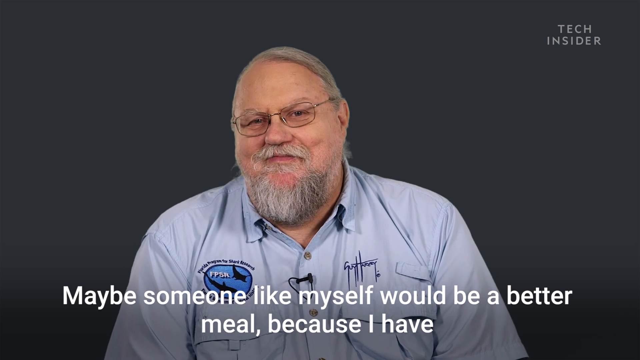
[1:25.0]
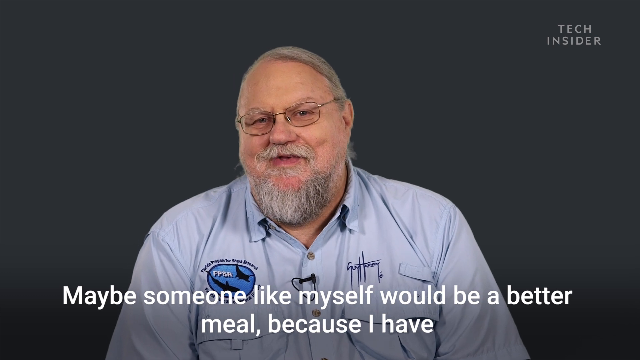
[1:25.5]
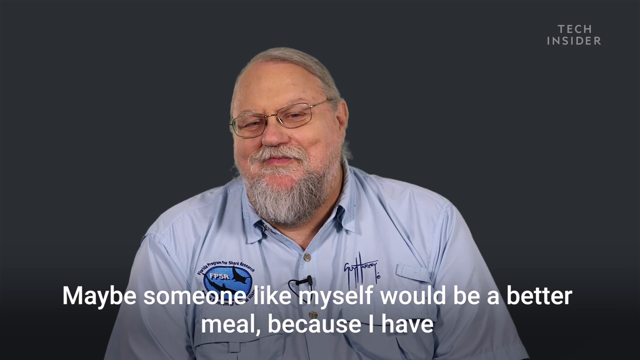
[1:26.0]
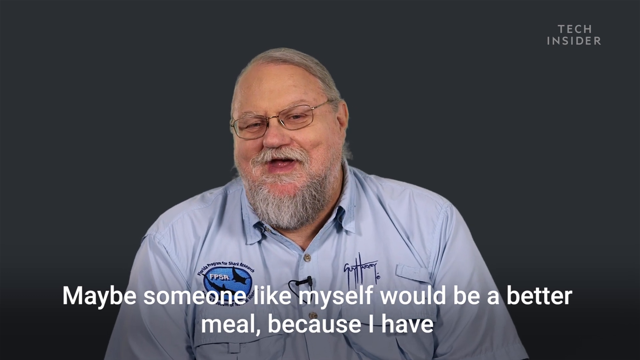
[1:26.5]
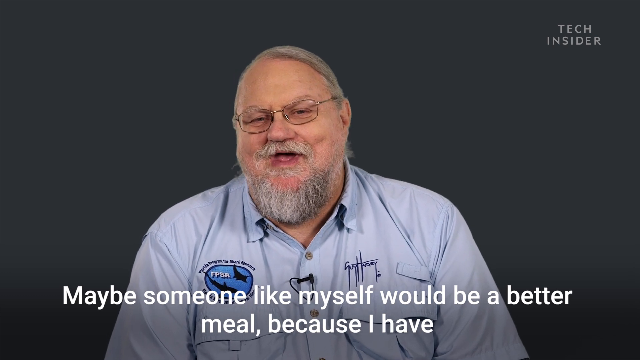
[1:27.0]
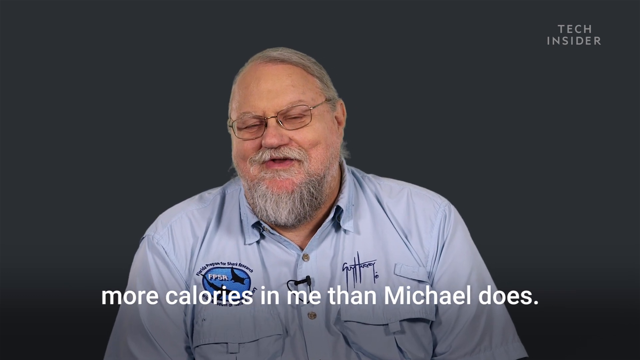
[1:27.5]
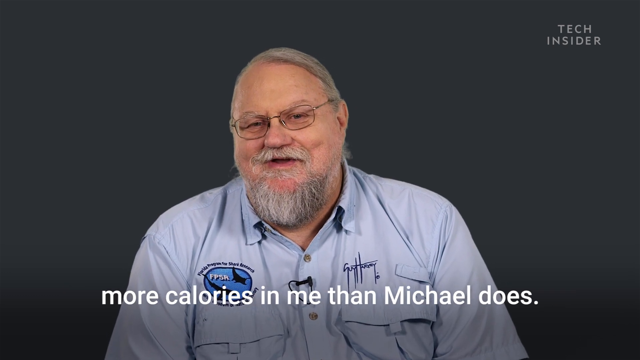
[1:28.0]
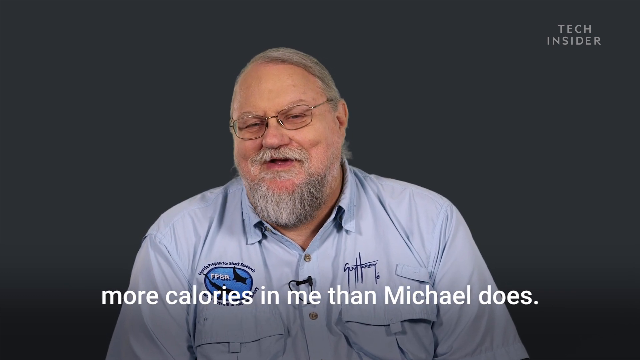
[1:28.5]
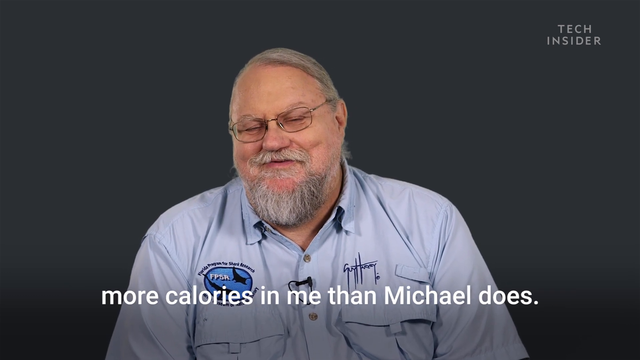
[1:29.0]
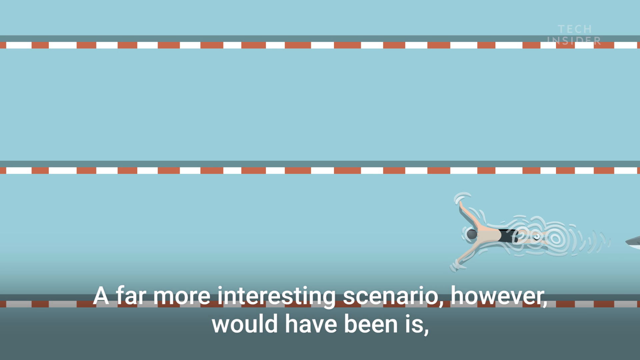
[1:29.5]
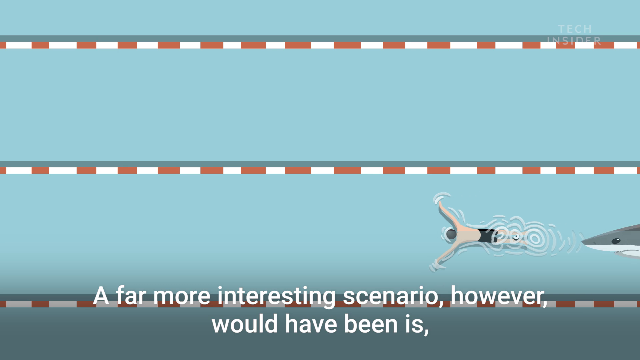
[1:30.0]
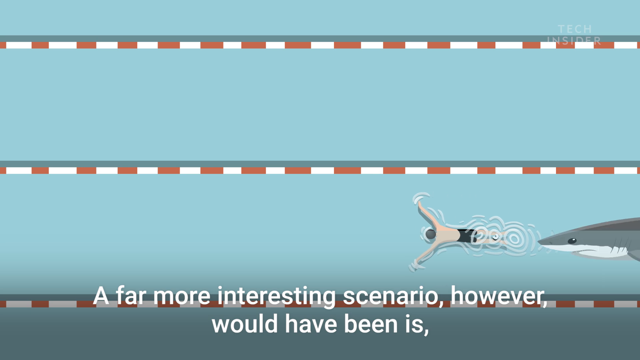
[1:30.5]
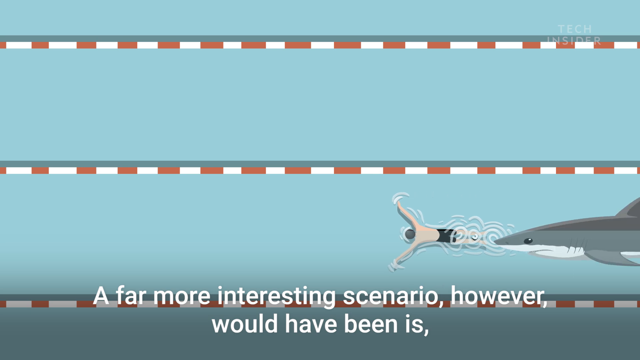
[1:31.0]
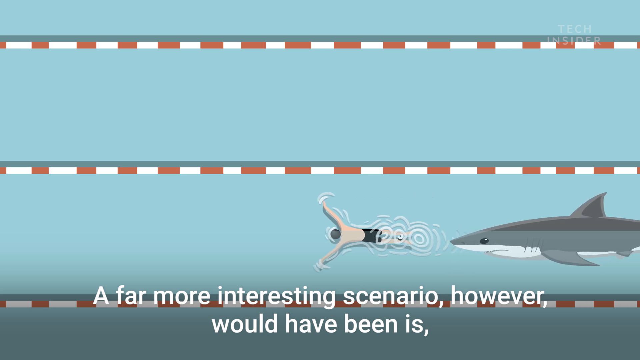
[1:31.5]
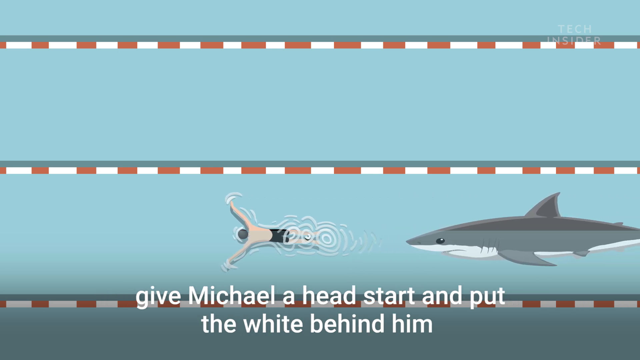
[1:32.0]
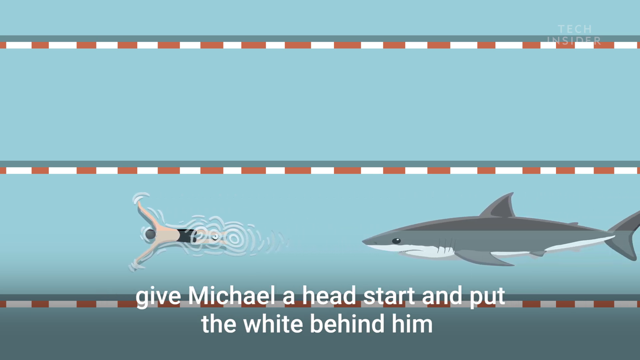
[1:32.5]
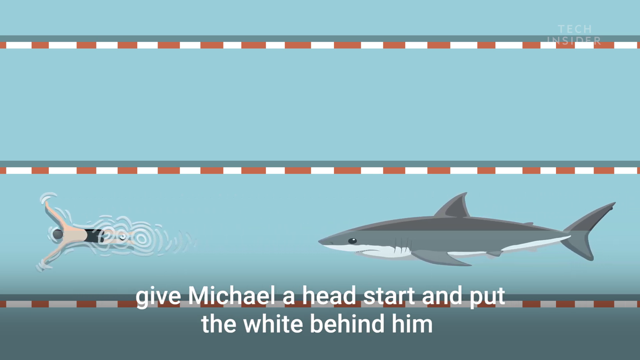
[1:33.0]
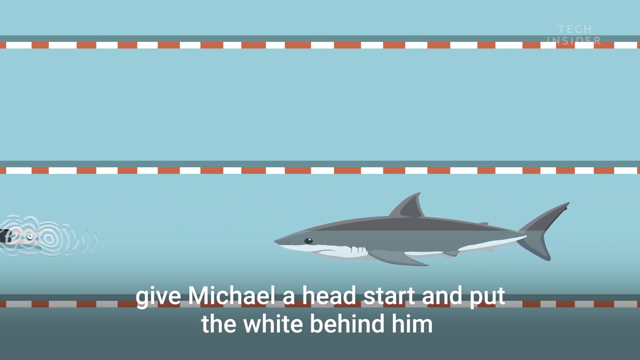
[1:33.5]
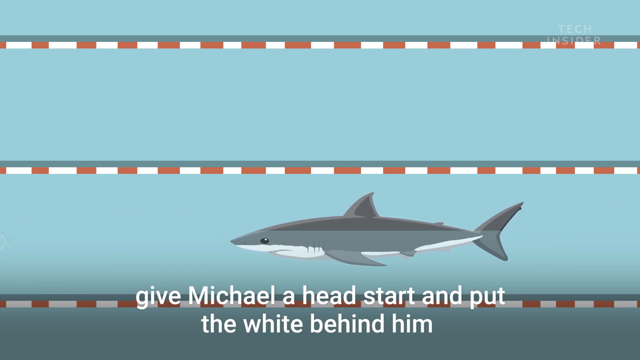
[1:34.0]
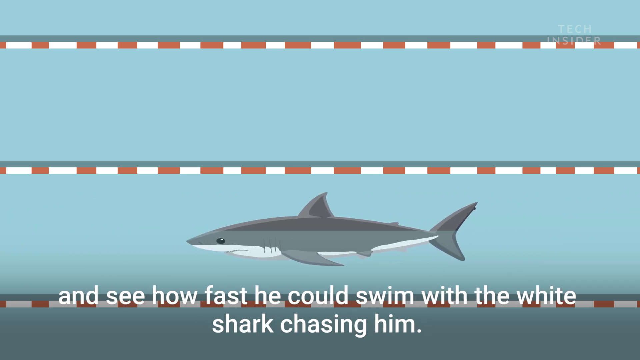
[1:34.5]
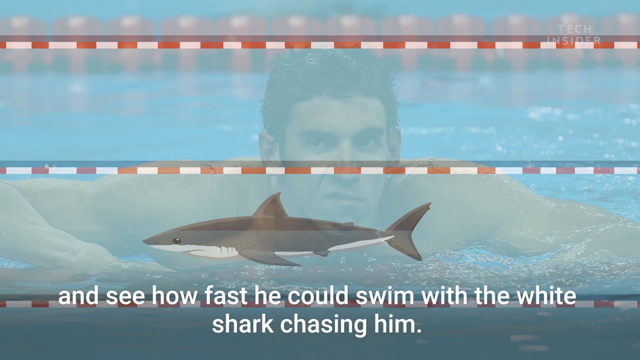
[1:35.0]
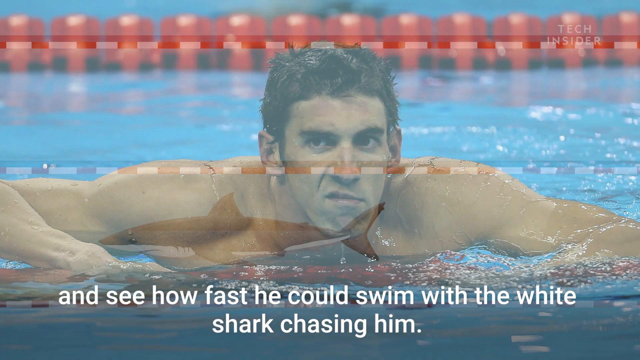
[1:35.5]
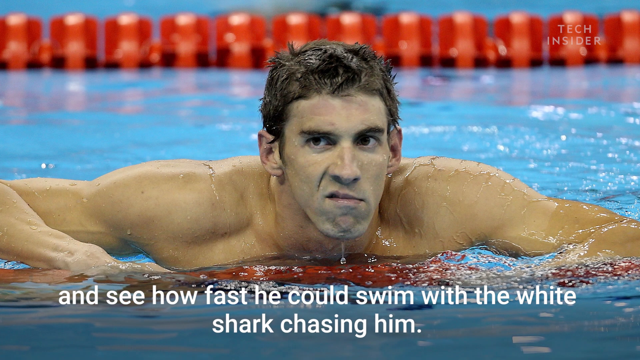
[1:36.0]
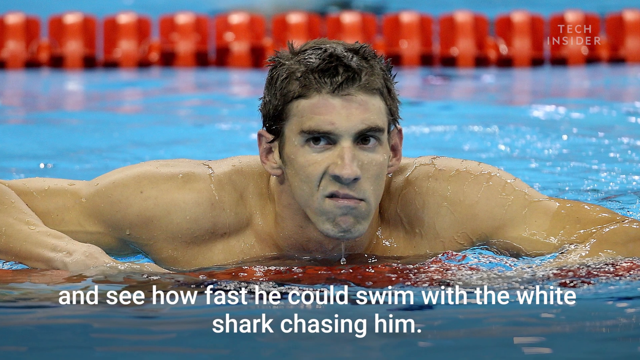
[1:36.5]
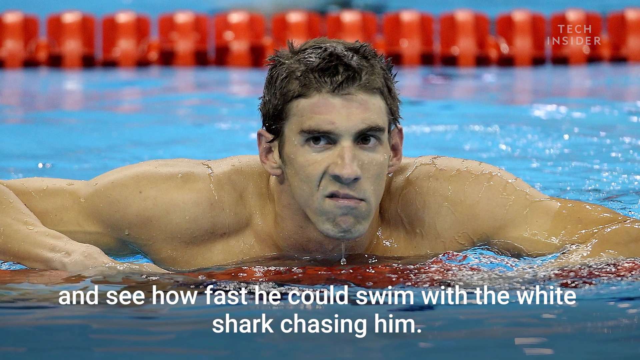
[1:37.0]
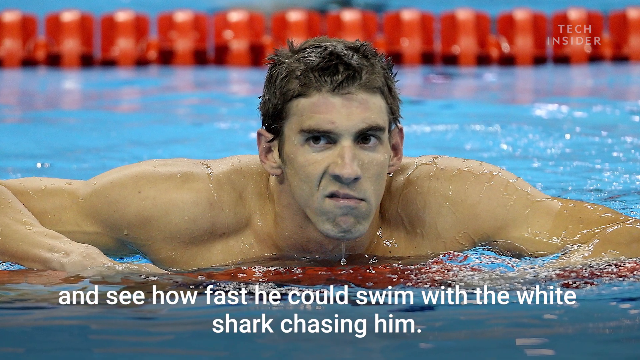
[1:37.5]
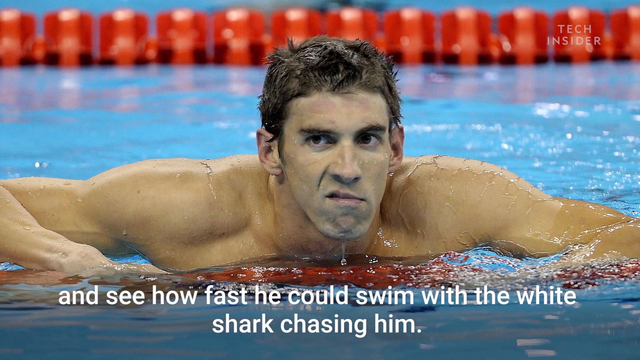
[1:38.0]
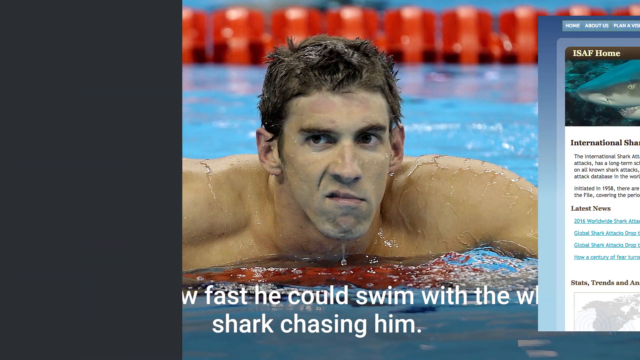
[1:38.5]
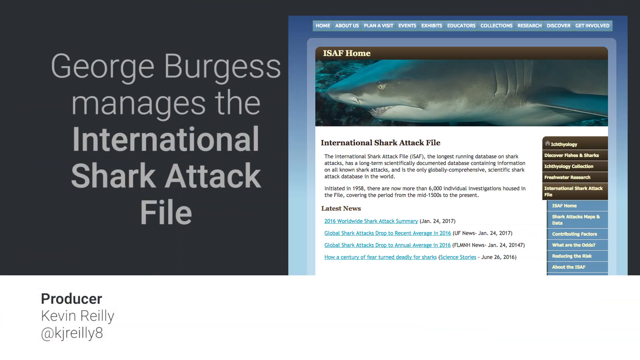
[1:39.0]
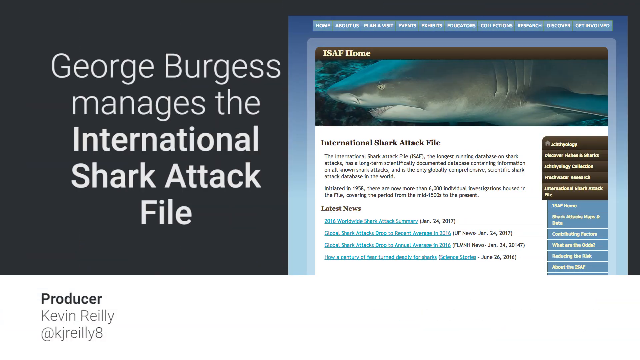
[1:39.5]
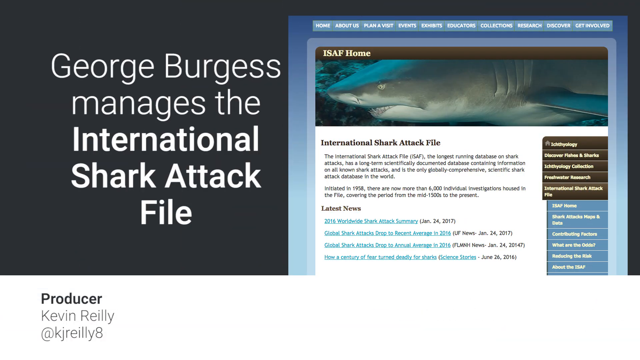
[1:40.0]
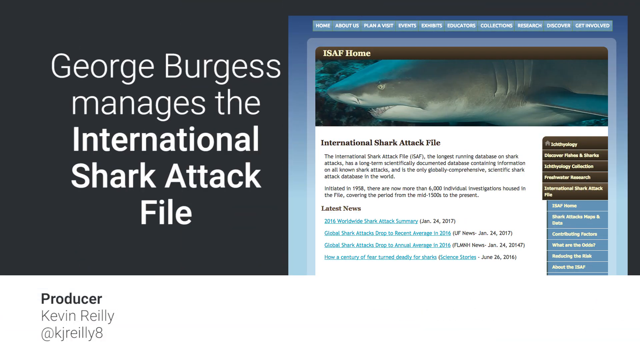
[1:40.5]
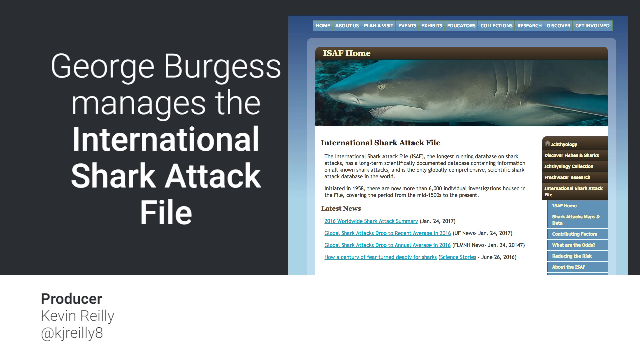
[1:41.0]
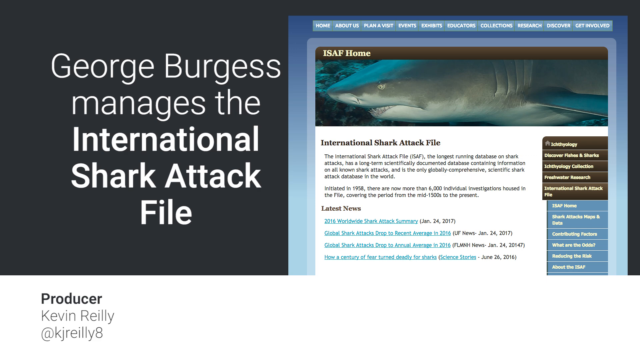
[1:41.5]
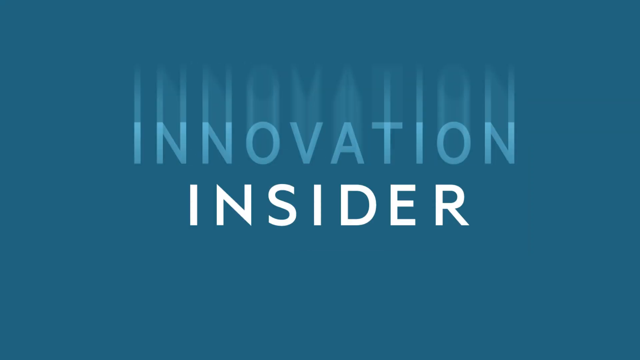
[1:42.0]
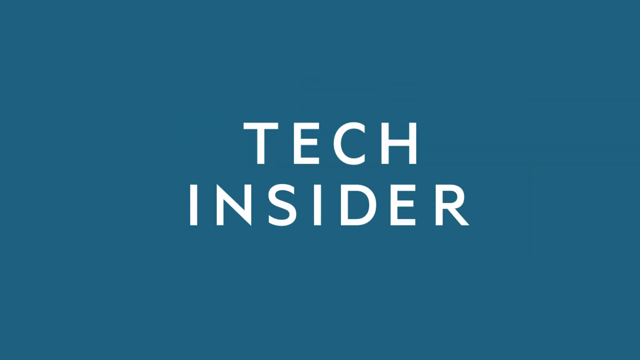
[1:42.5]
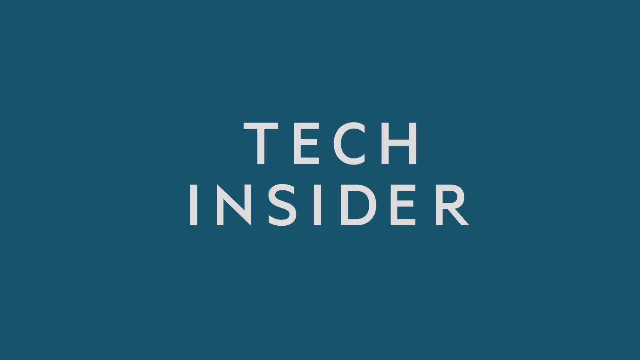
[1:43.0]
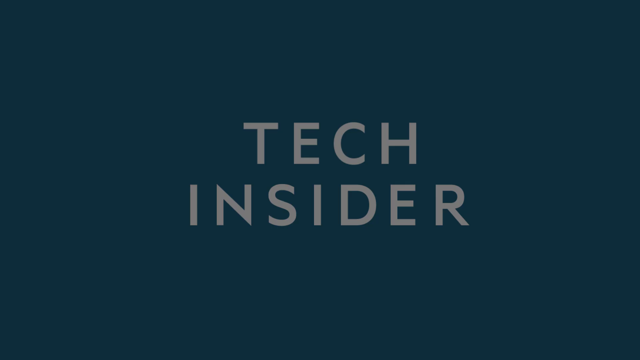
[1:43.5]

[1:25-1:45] An Insider Tech logo is on the bottom right of the screen, and Tech Insider is on the top right of the screen. A cartoon-like simulation shows a shark pushing or nudging Phelps in the water.